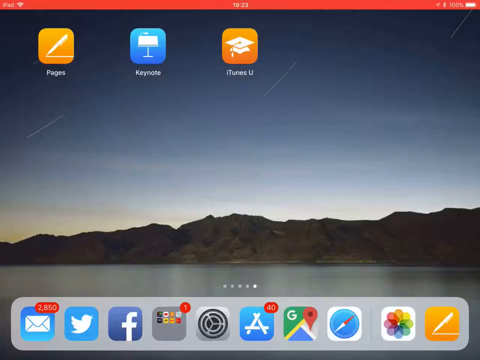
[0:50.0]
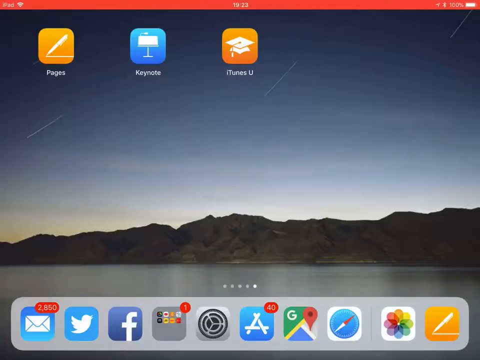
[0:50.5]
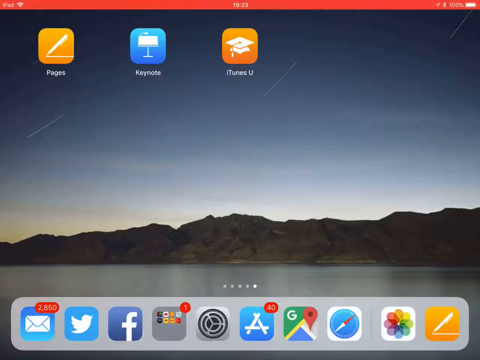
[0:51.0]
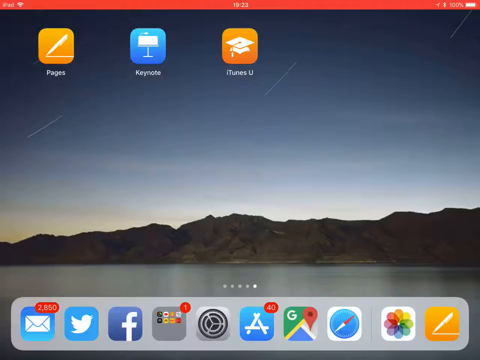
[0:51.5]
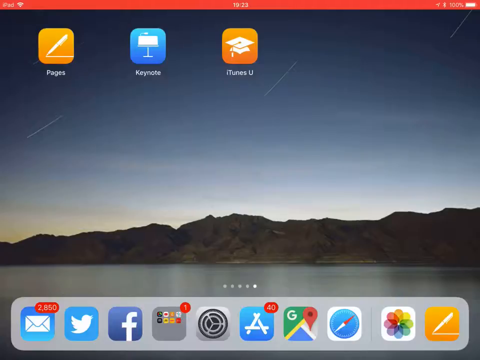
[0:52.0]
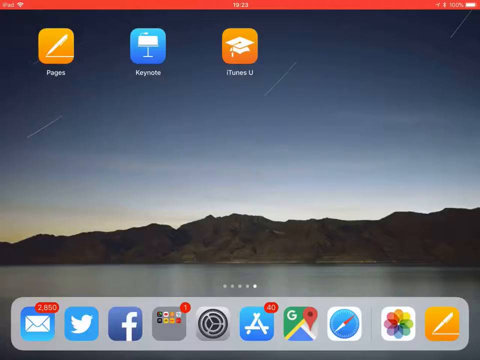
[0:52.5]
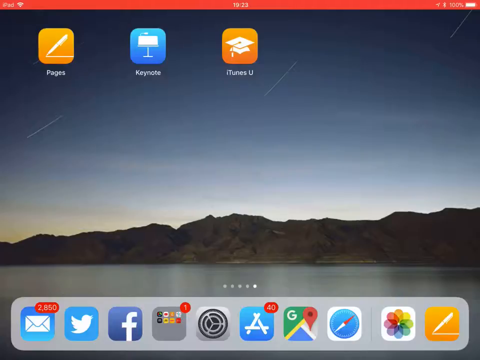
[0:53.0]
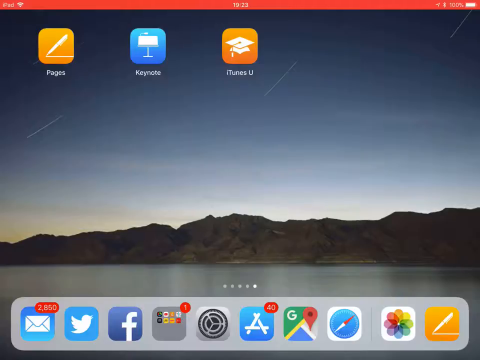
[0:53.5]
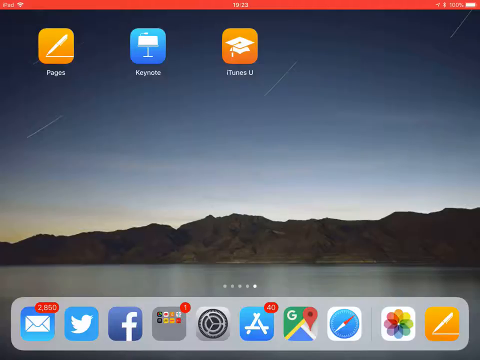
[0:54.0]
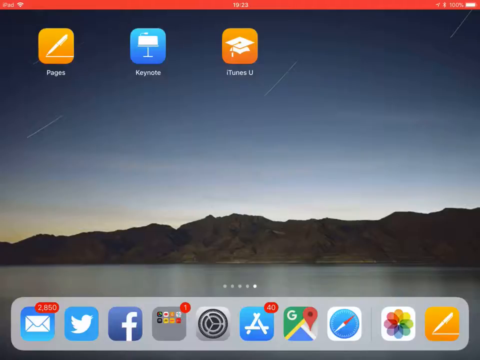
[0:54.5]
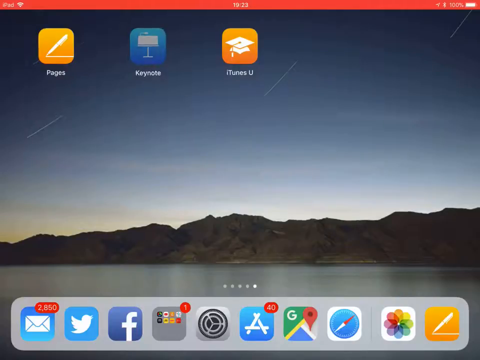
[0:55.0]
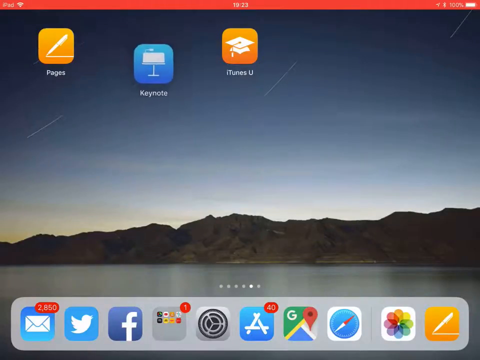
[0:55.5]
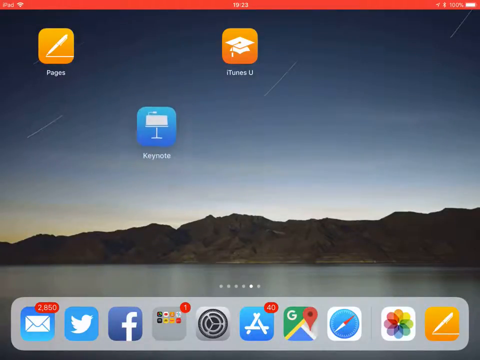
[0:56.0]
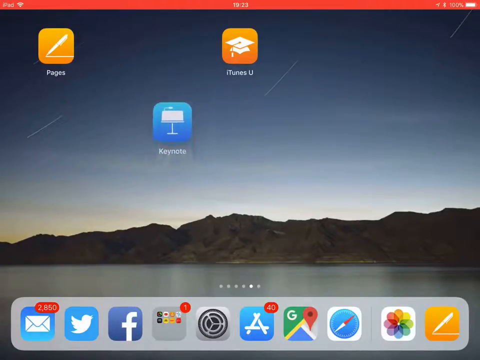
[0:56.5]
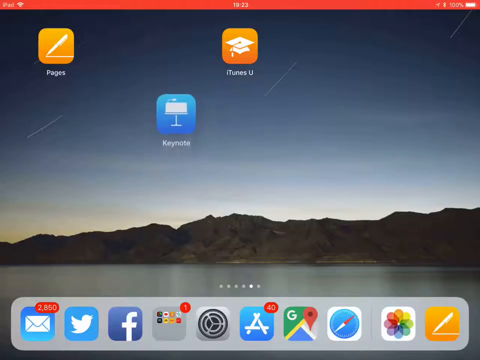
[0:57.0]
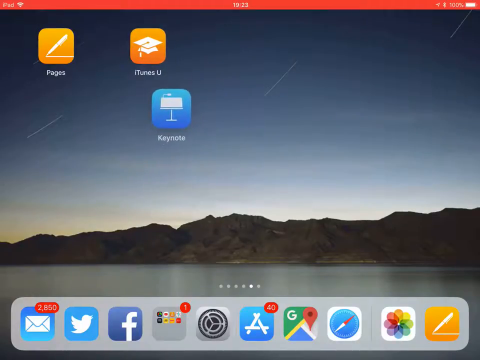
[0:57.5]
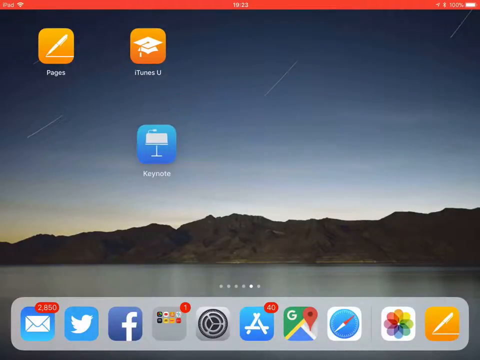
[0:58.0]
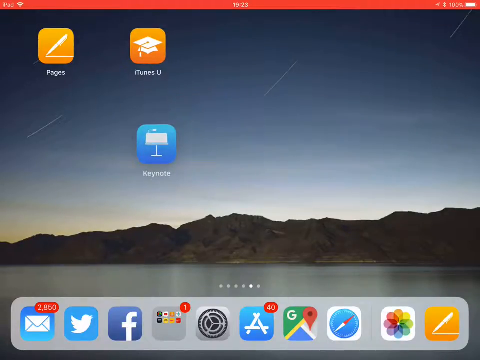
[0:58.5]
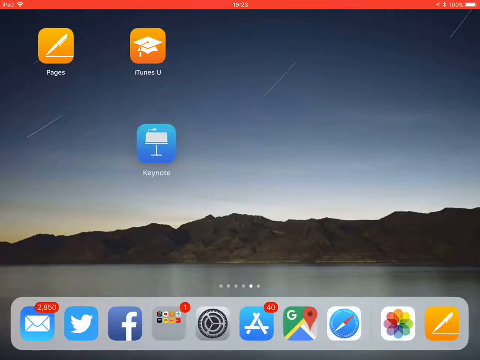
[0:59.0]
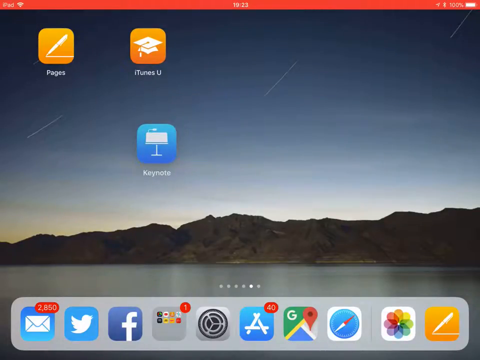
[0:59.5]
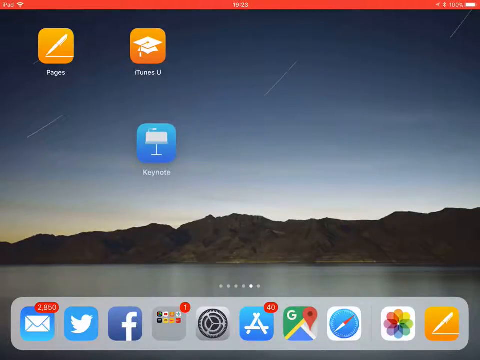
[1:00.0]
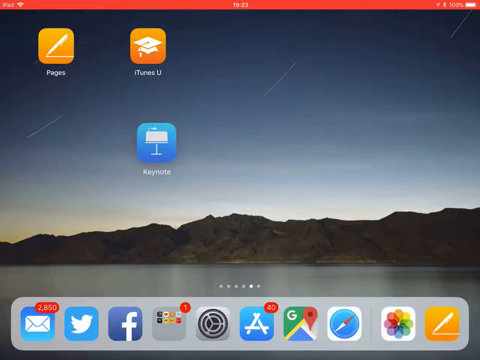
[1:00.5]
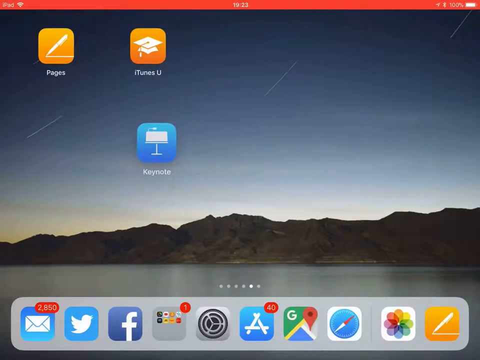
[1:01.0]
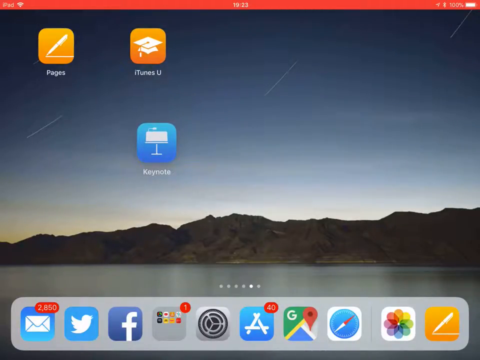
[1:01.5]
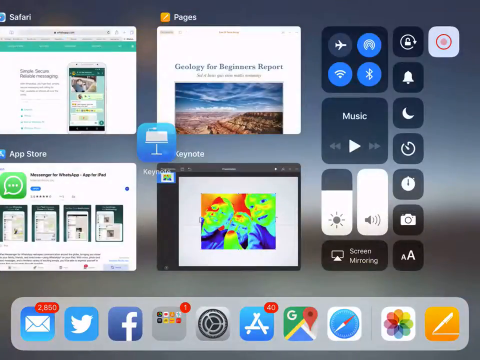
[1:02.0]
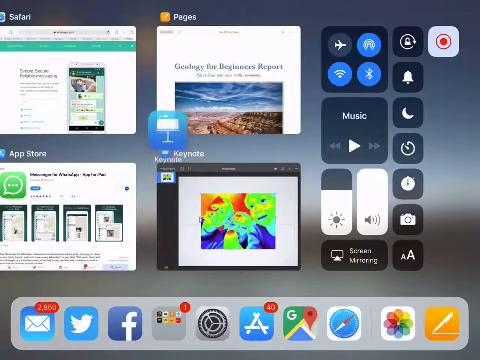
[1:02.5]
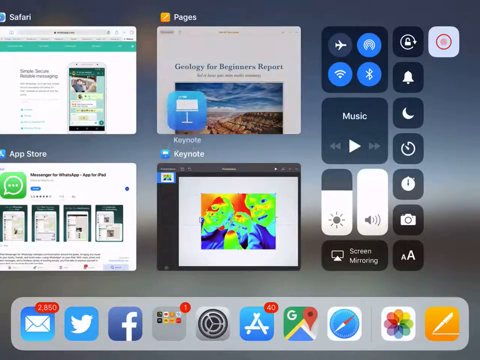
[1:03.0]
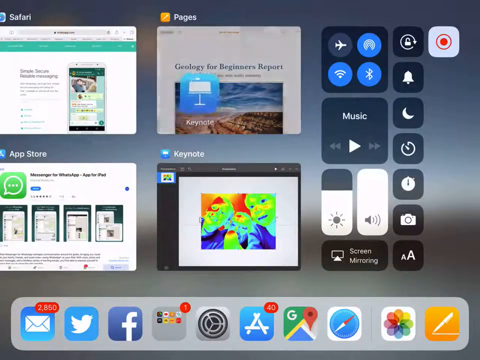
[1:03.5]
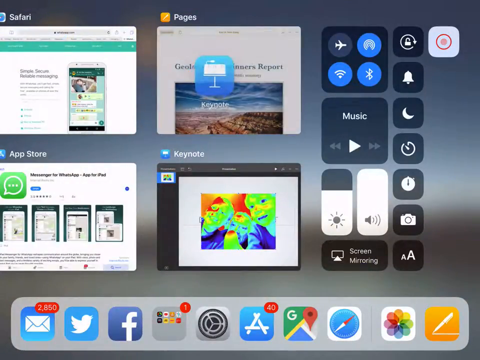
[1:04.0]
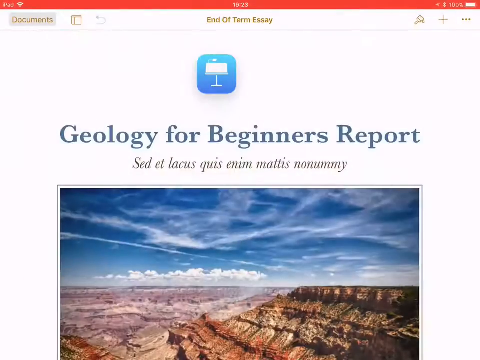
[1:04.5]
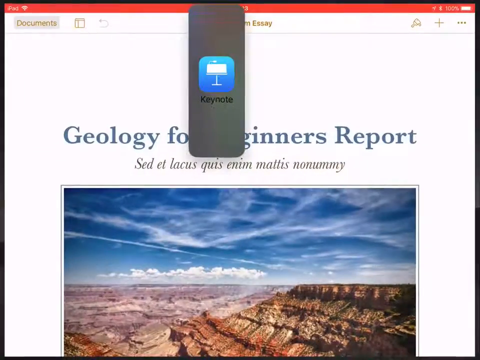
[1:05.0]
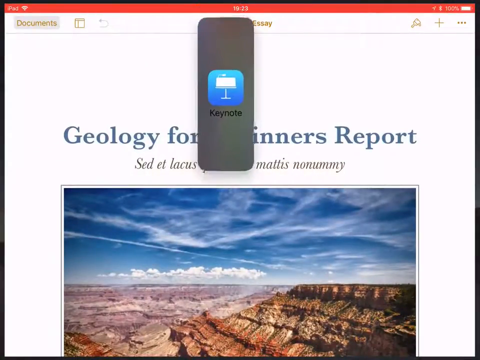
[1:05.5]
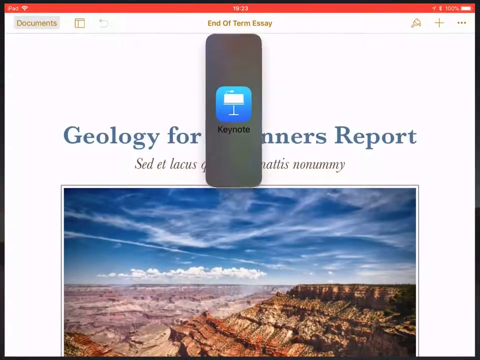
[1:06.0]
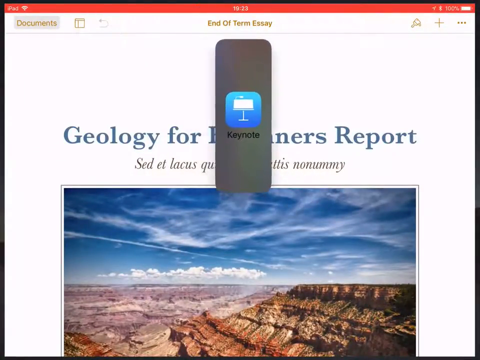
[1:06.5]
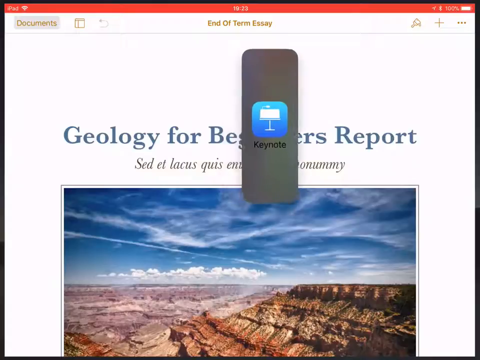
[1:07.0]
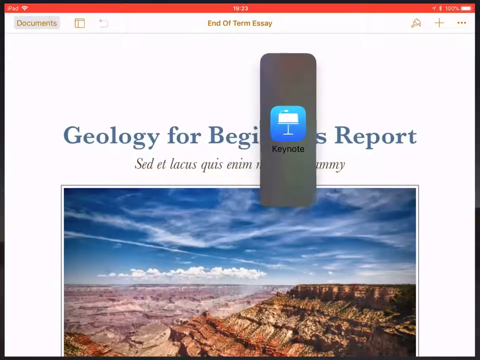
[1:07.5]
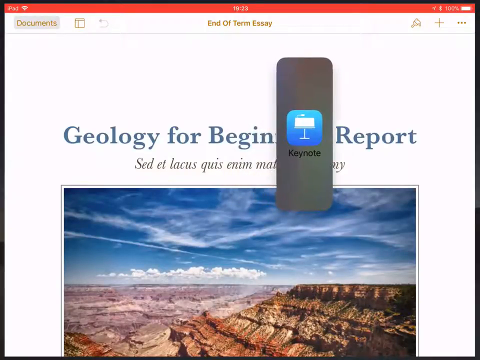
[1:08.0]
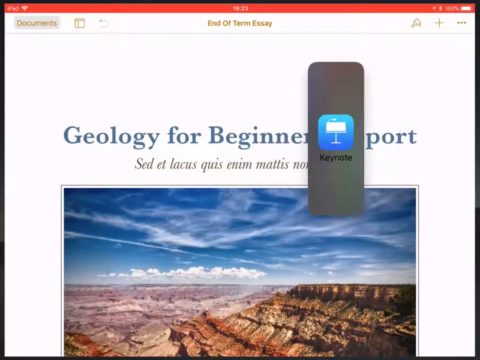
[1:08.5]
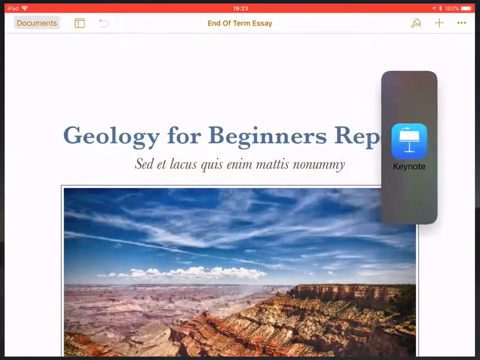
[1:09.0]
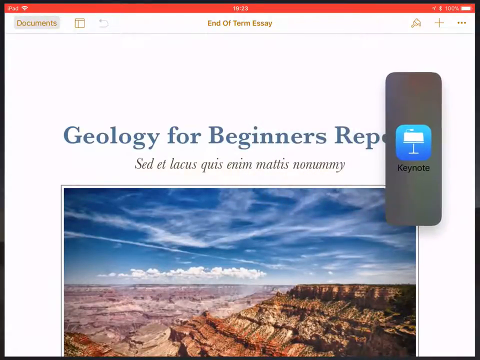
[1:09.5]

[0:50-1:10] An icon is dragged across the screen. The Keynote app is dragged over the web page that is open at the bottom.